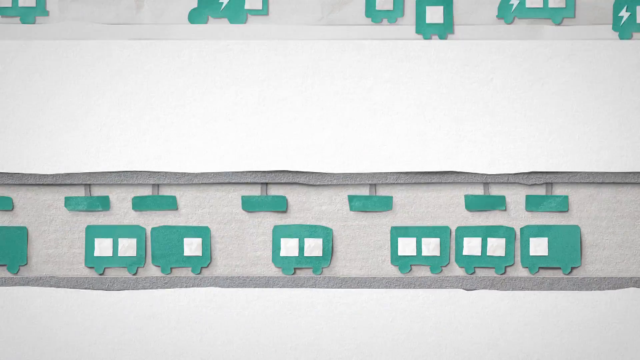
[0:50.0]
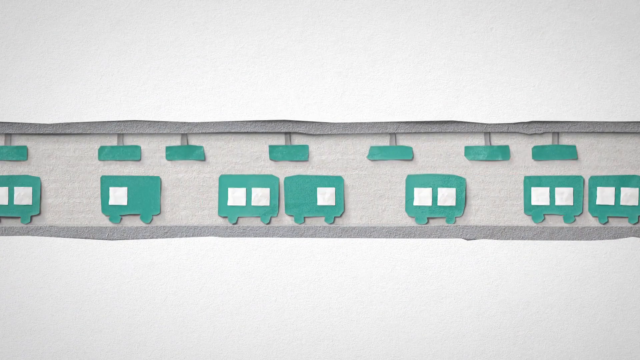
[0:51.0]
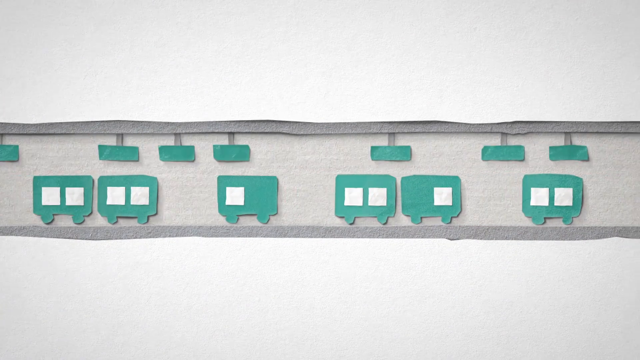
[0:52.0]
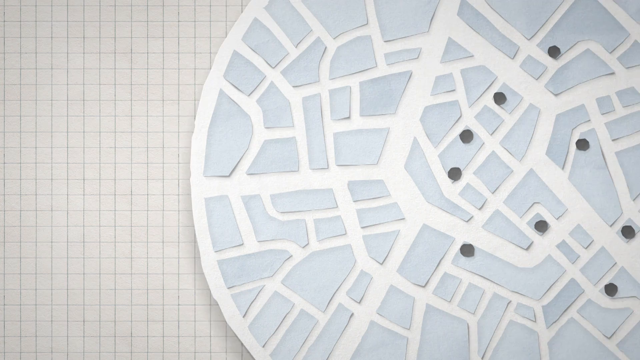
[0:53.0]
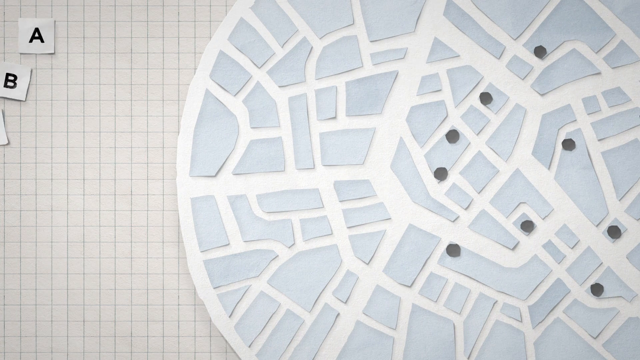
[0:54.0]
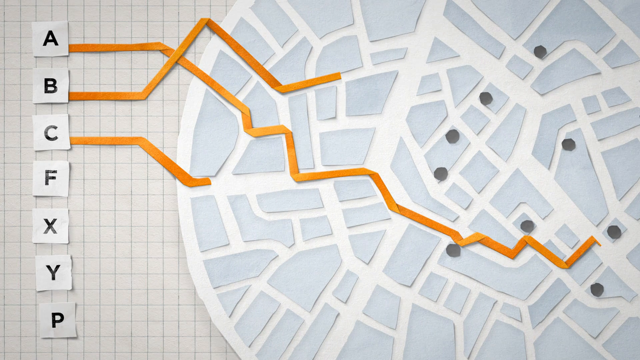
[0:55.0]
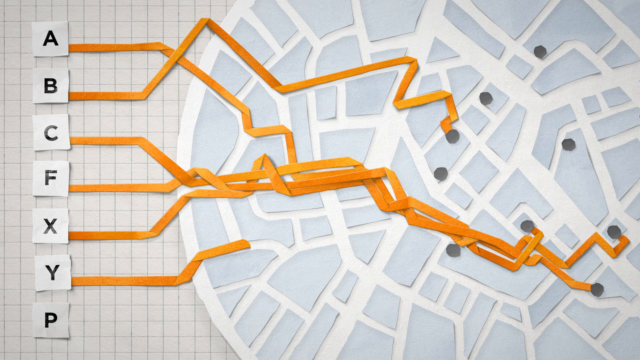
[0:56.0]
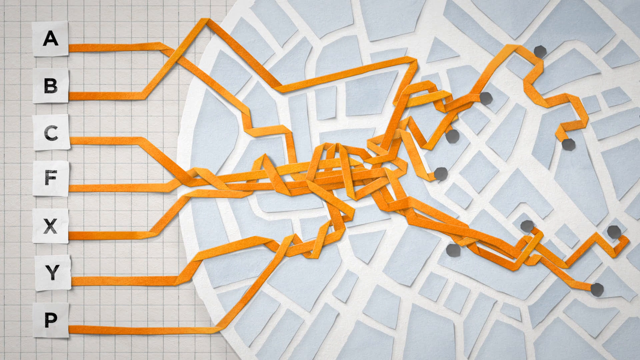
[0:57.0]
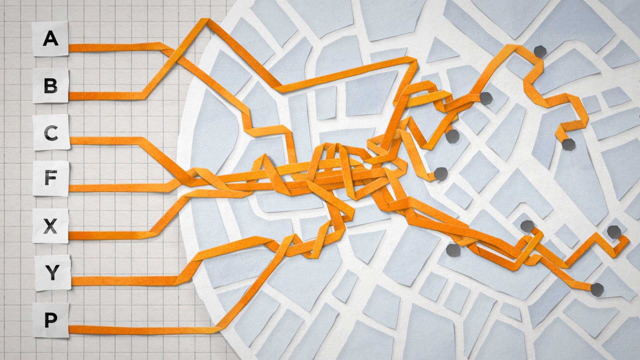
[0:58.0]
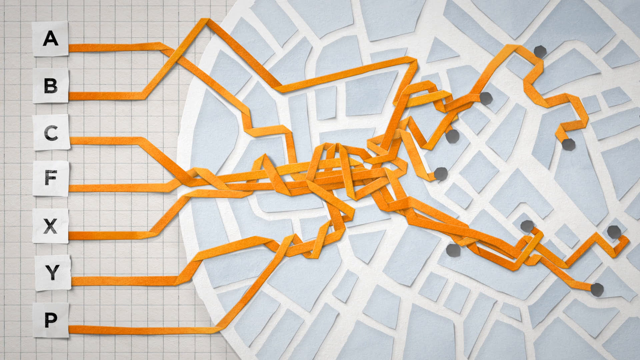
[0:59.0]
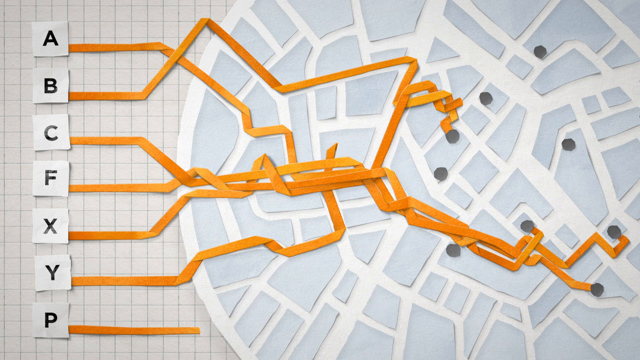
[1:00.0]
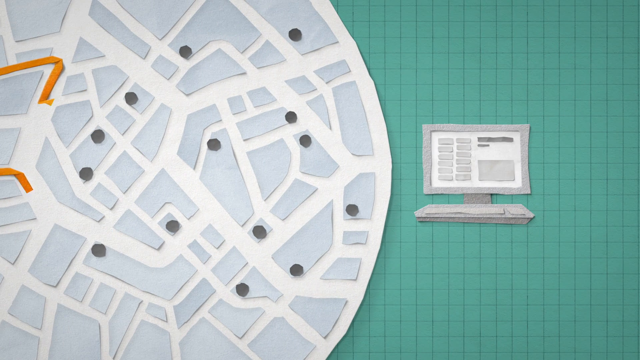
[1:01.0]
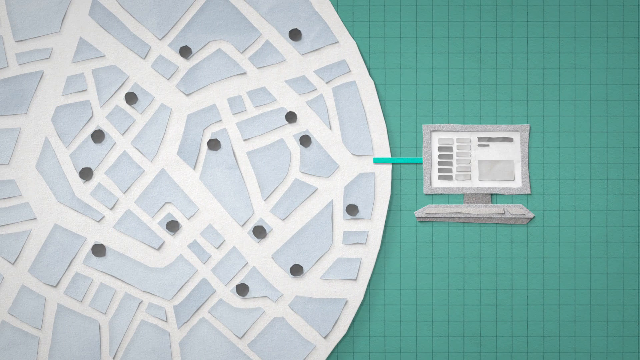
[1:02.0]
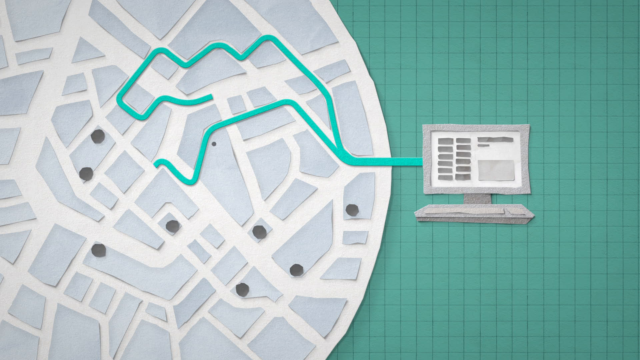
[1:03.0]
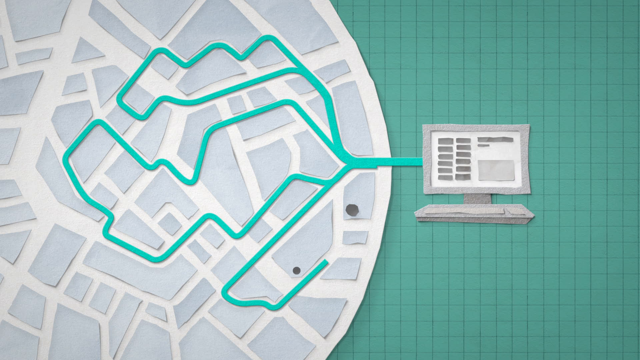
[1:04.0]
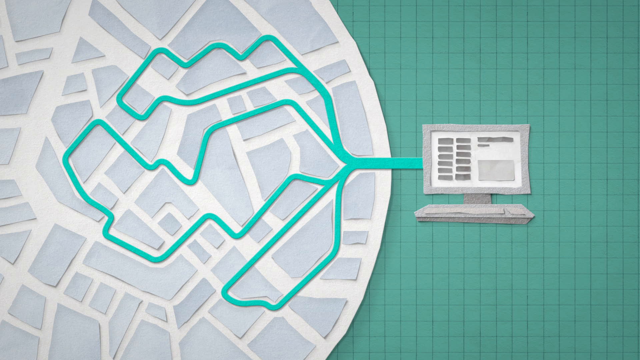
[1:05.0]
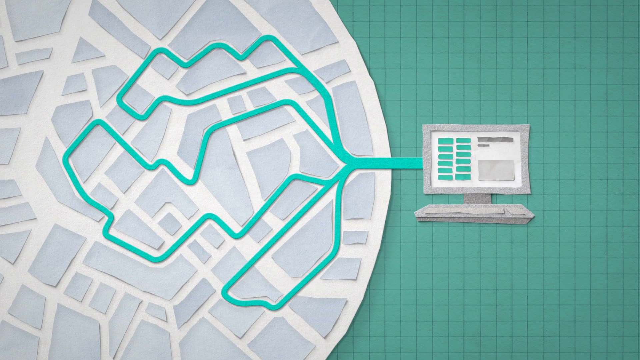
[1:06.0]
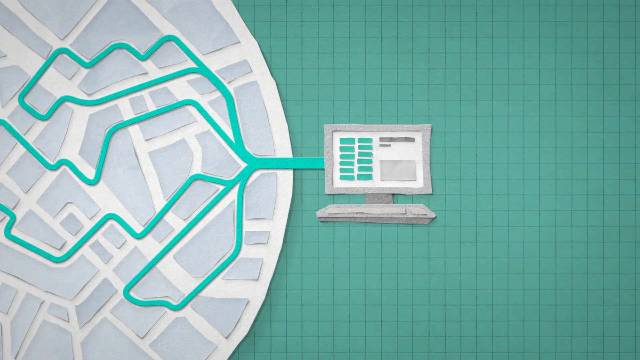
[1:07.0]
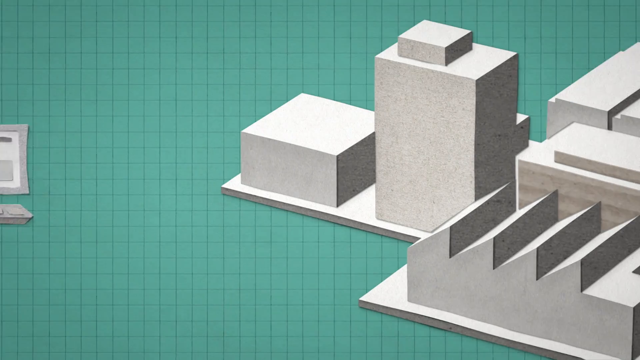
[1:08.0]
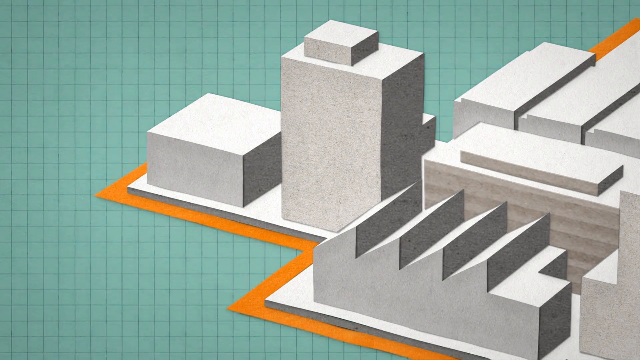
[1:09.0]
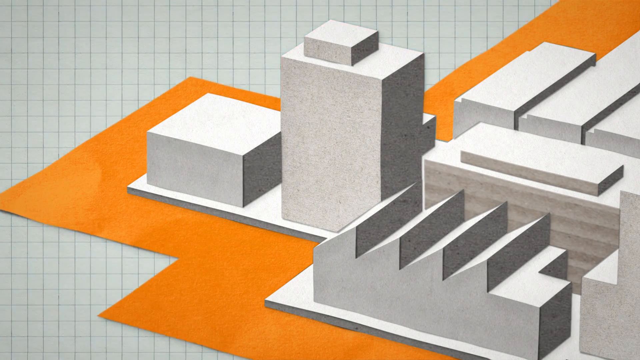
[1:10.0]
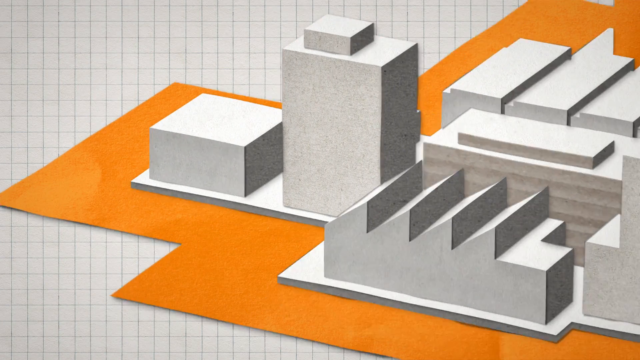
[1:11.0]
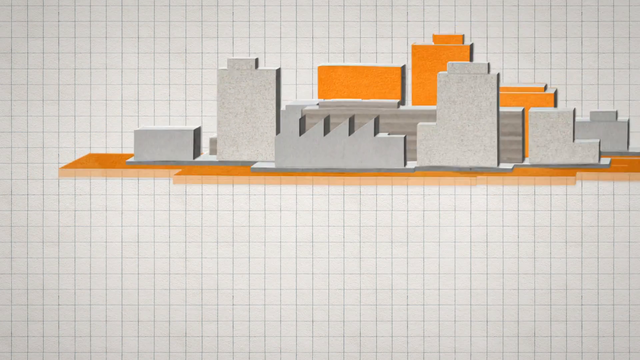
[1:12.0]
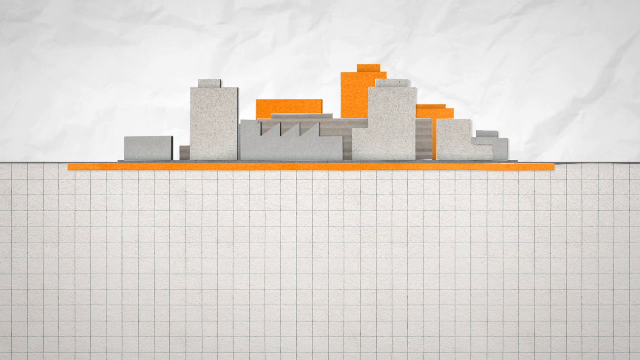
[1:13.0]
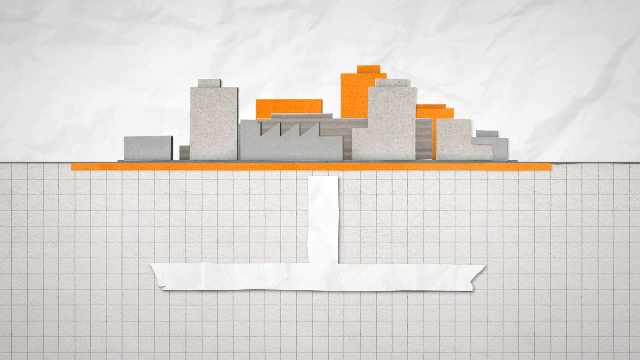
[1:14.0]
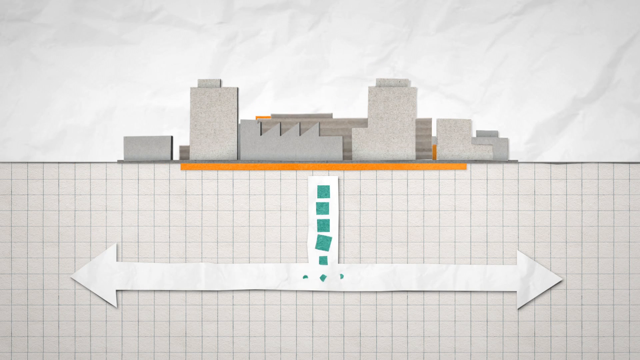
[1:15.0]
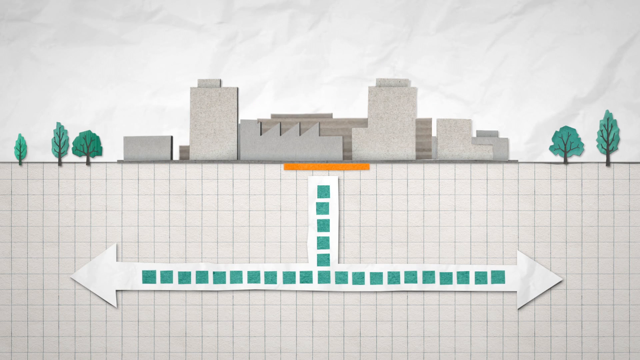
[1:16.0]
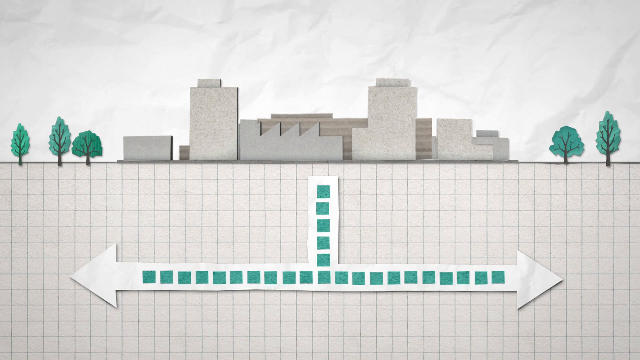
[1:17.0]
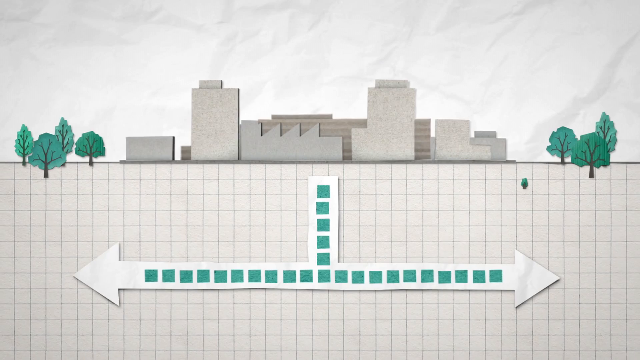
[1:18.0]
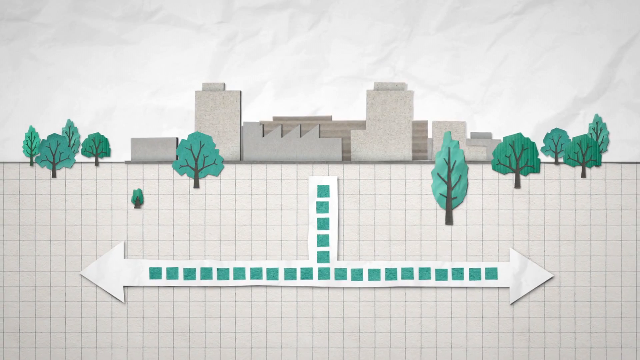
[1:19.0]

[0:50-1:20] On a grid background there is a white semi-circular background with light gray blocks in it, and within the gray blocks are some darker gray dots; it looks like a paper-based representation of a city of some sort. Letters appear on the side: a, b, c, f, x, y. Orange lines come out from the letters, disperse and tangle within the light gray blocks, which might represent houses; the orange lines seem to represent freight routes to the gray dot destinations. The white grid is replaced with a teal grid, and a computer is shown with a teal route that goes through all of the gray dot locations in a more efficient way, so the routes don't get as tangled. A version of actual buildings then appears with an orange background, and the camera zooms out to show a cross section of these buildings. An arrow appears at the bottom as trees grow, and the arrows have blue dots in them.